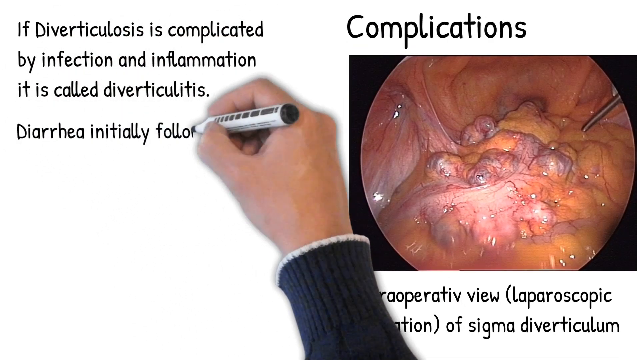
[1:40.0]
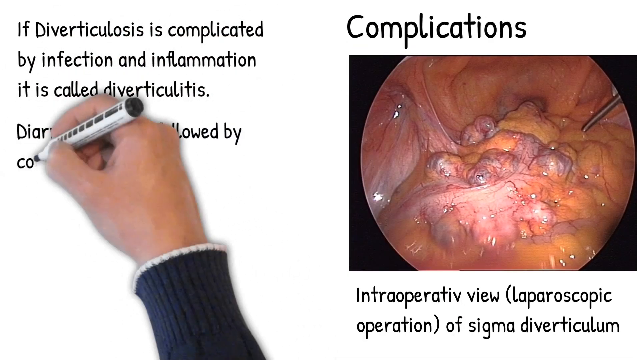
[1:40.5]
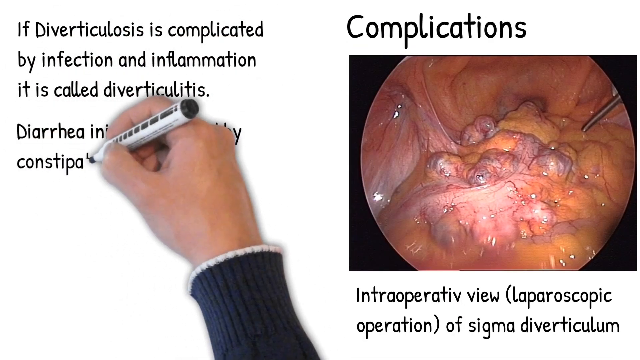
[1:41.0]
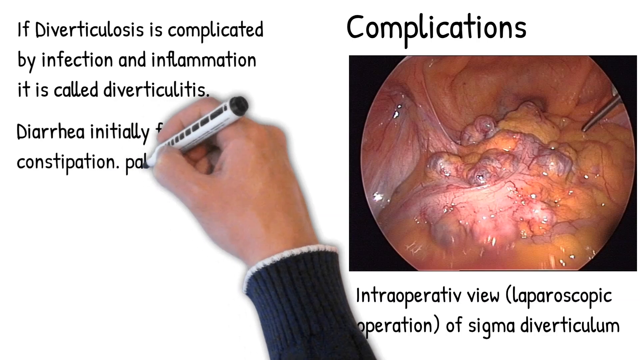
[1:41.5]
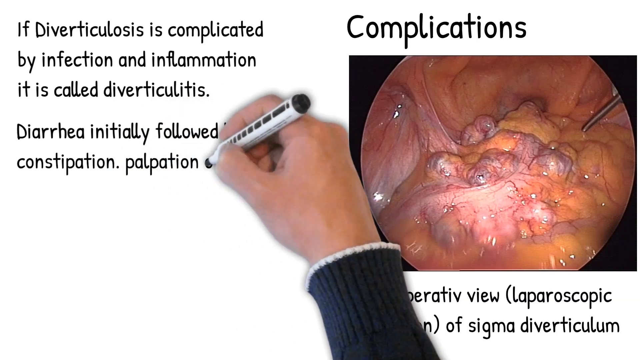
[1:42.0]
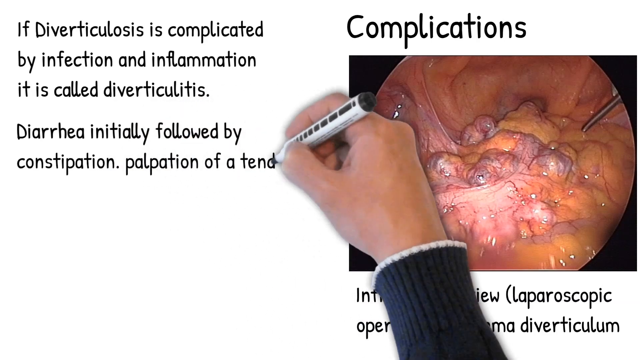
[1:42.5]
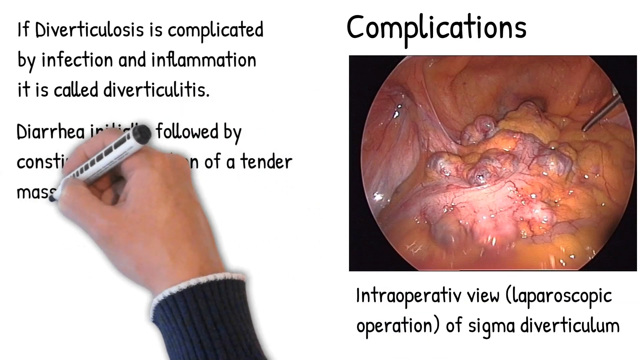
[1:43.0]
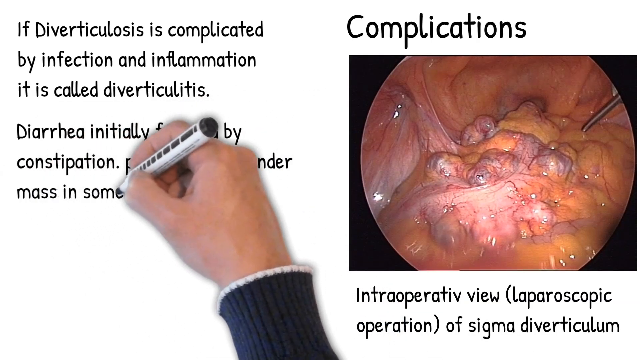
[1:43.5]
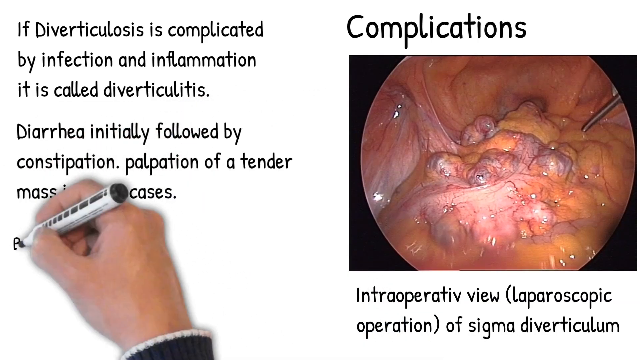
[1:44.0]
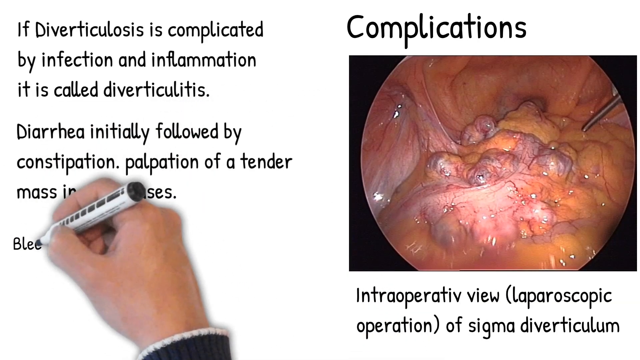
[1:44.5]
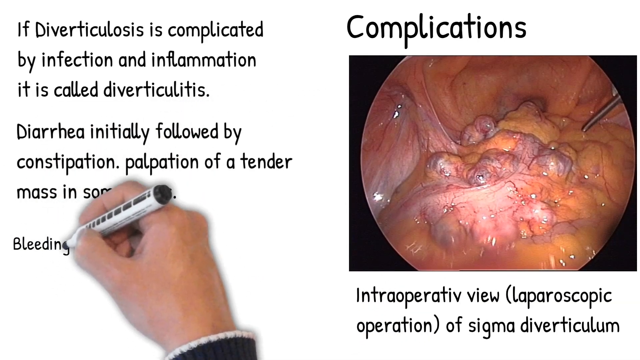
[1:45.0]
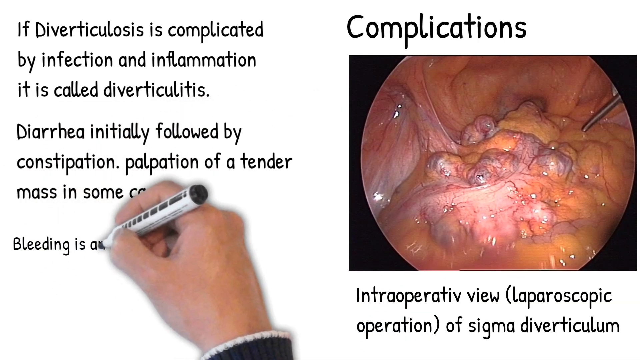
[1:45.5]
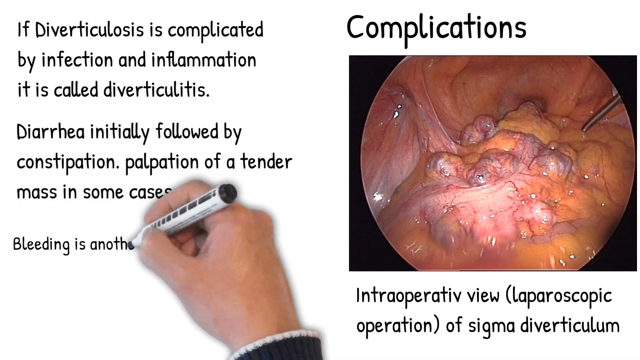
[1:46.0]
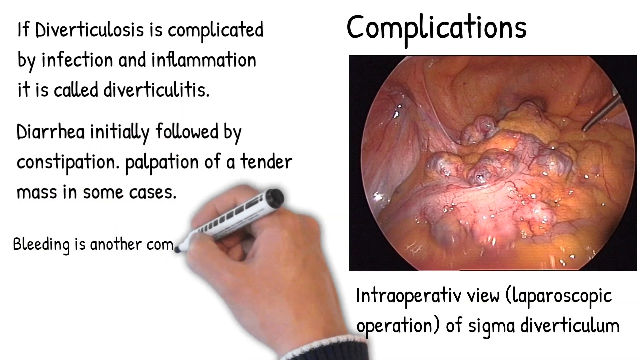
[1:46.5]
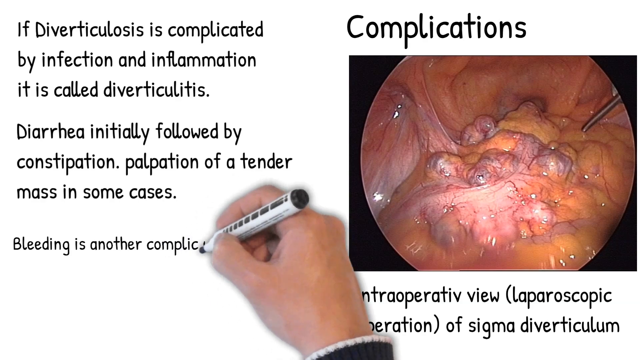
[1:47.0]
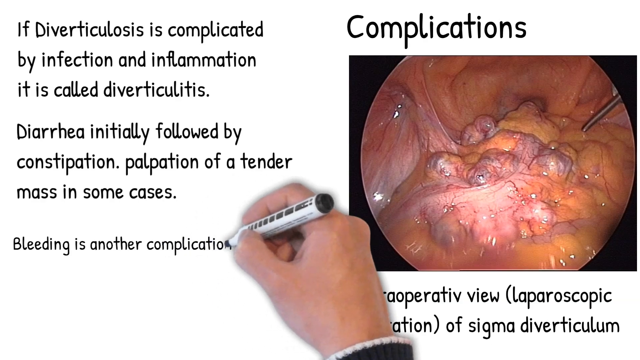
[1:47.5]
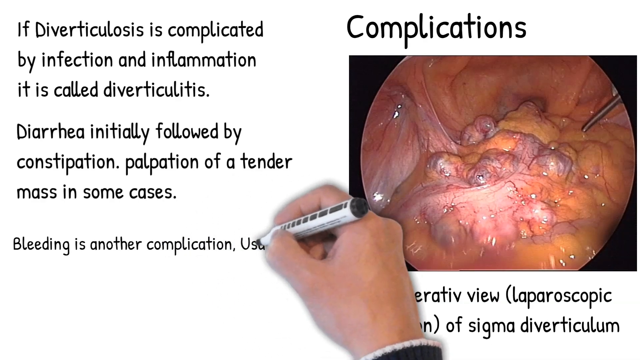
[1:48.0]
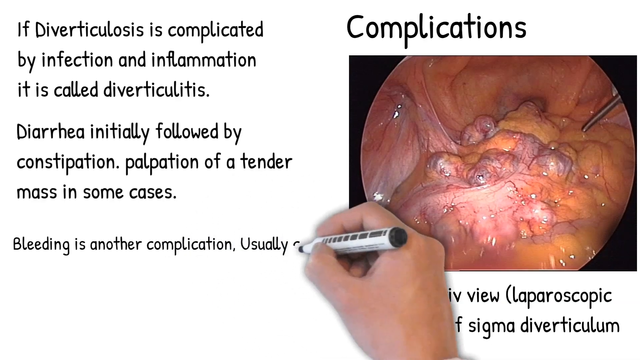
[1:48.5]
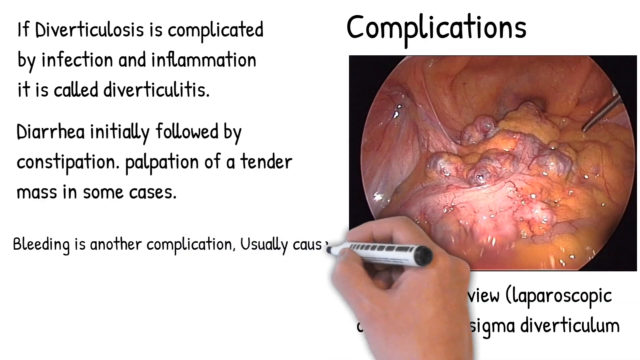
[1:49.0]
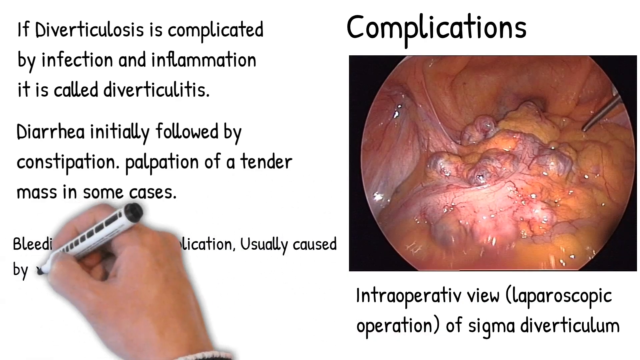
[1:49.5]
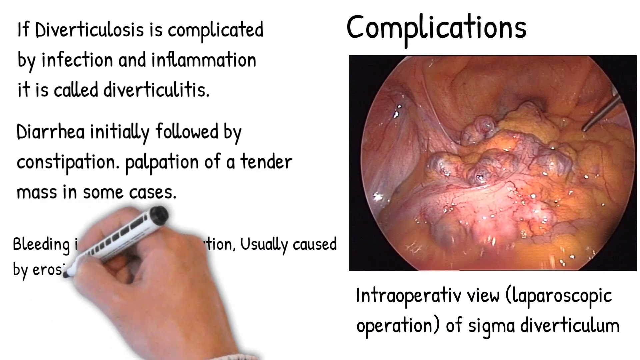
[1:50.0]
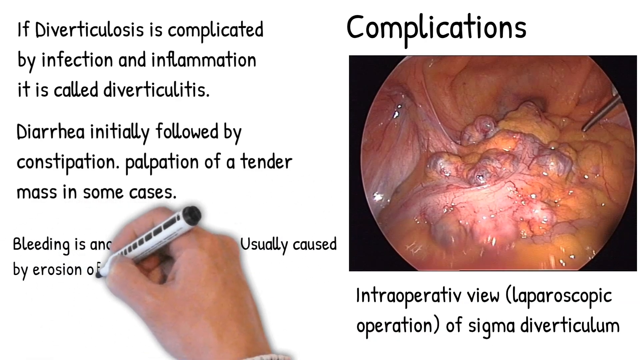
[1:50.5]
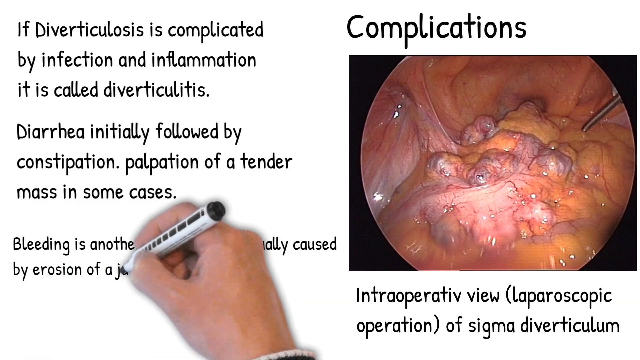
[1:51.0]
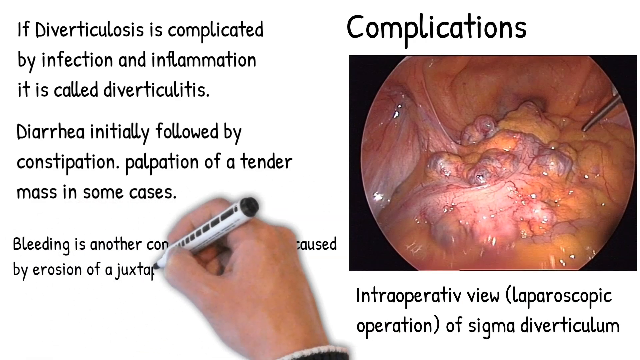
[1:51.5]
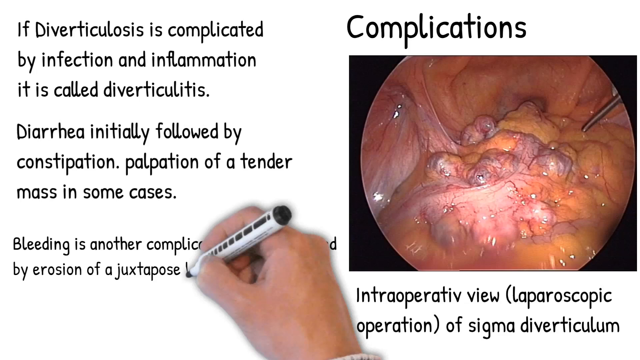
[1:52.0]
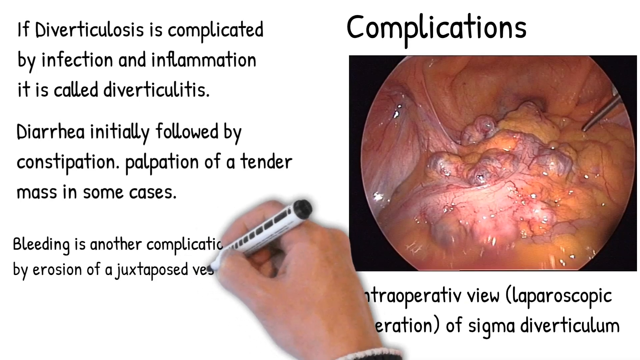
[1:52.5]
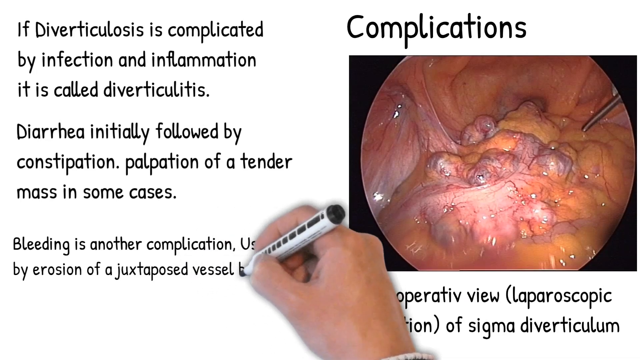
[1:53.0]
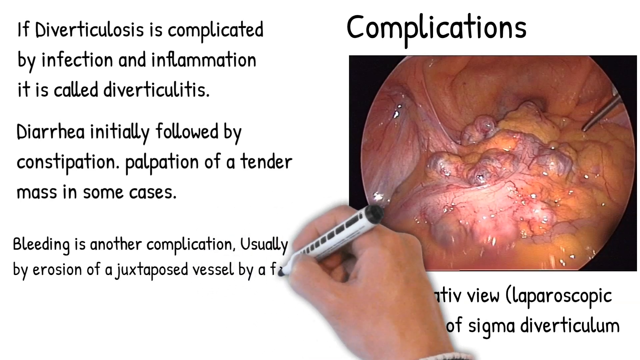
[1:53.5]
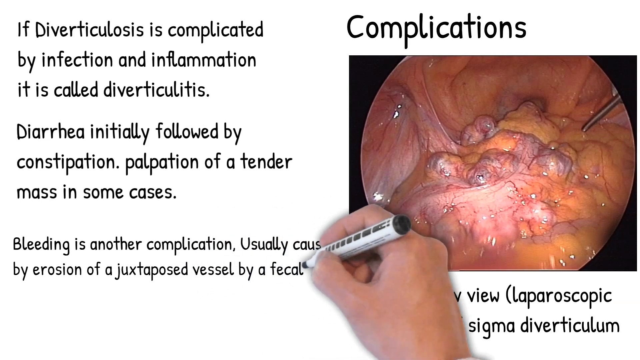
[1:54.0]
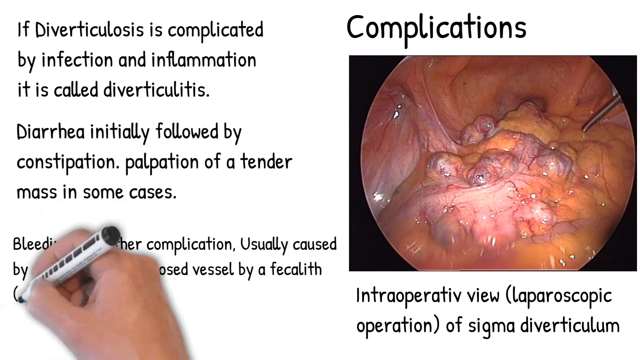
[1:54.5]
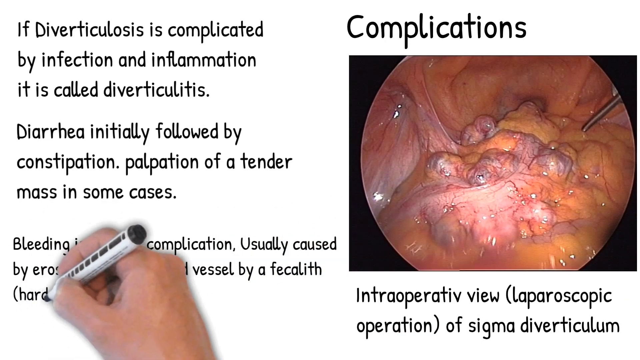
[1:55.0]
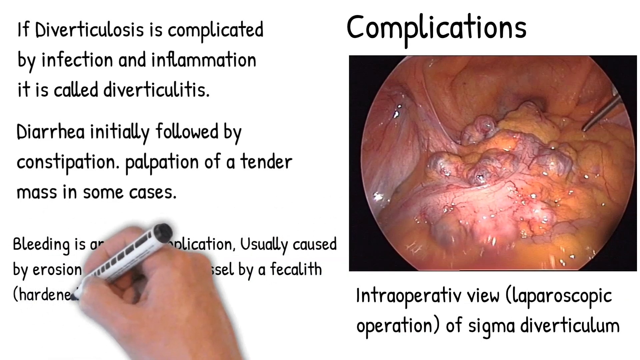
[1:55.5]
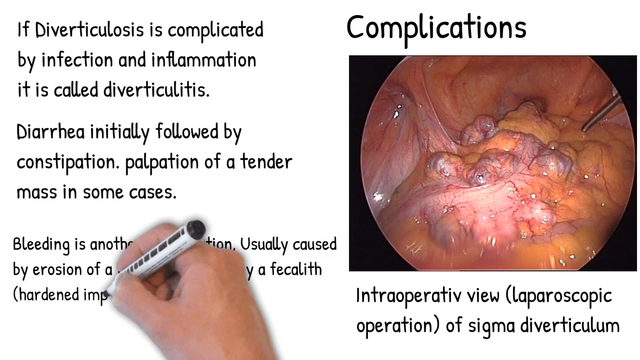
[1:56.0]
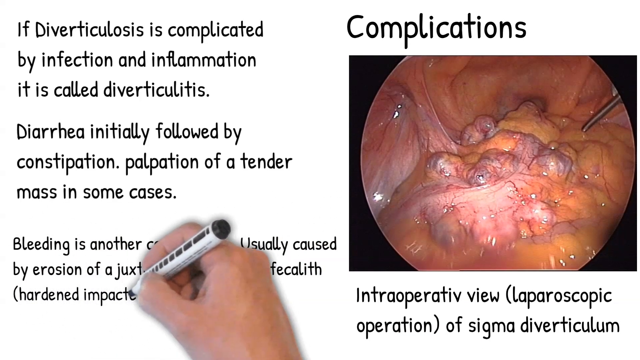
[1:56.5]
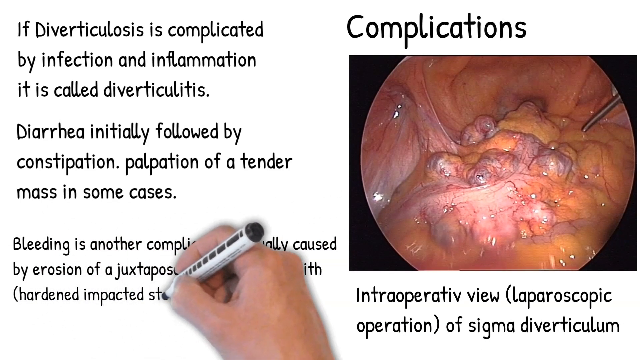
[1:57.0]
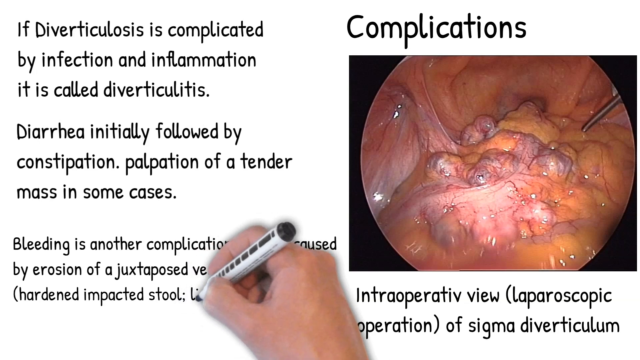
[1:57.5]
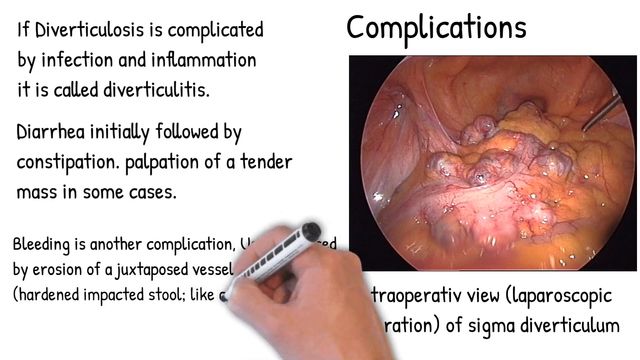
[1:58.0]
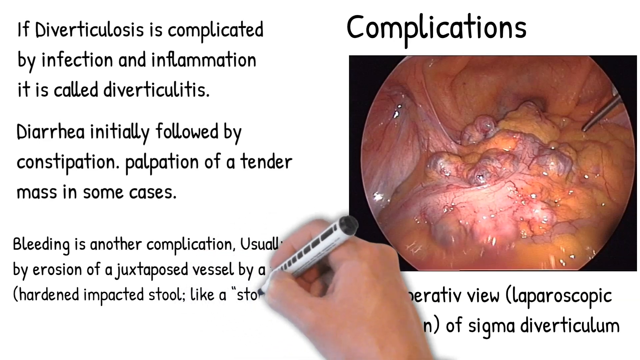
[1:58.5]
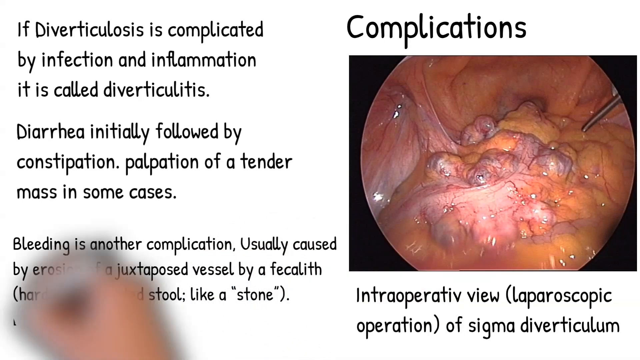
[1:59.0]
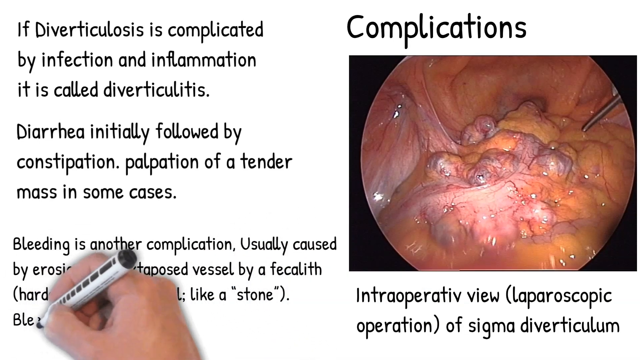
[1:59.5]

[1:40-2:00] The complications slide remains, with the laparoscopic view of the sigma diverticulum on screen. Text says that if it is complicated by infection and inflammation, it is called diverticulitis, and lists "diarrhea initially followed by constipation, palpitation of a tender mass in some cases." Another complication listed is bleeding, "usually caused by erosion of the juxtaposed vessel by hardened stool." Throughout, a hand writes the words one by one with the whiteboard marker.